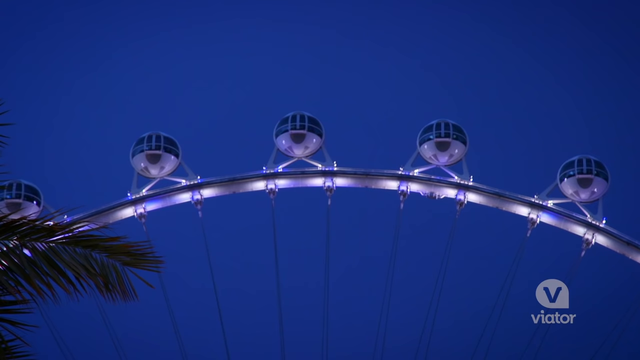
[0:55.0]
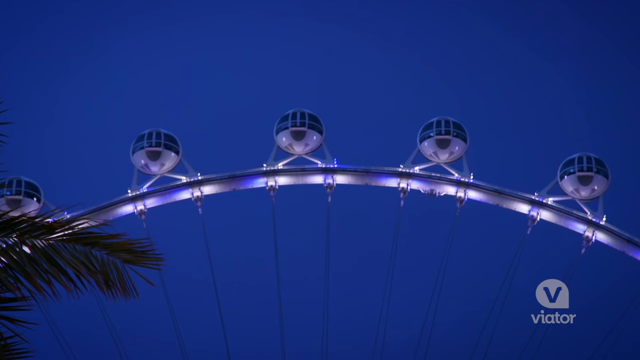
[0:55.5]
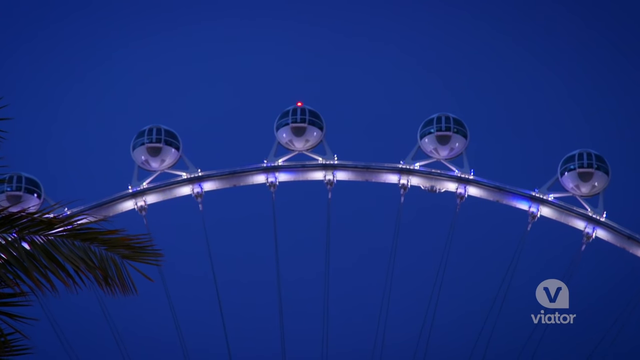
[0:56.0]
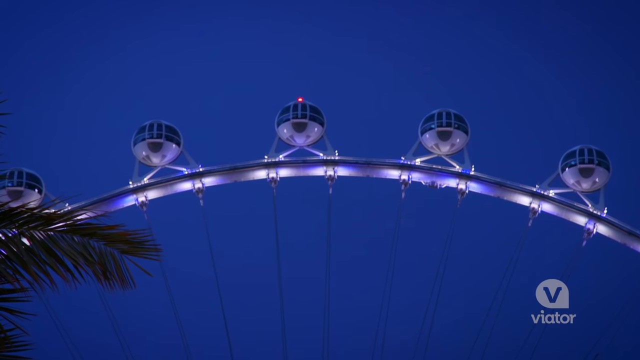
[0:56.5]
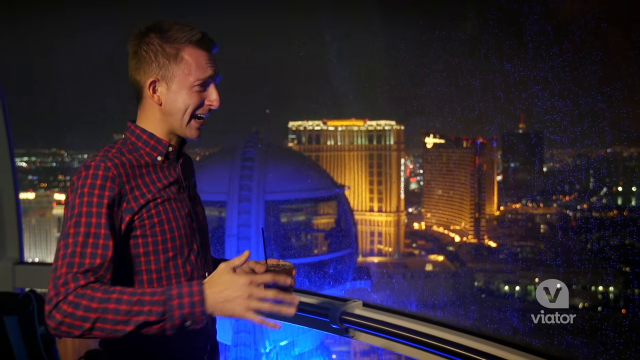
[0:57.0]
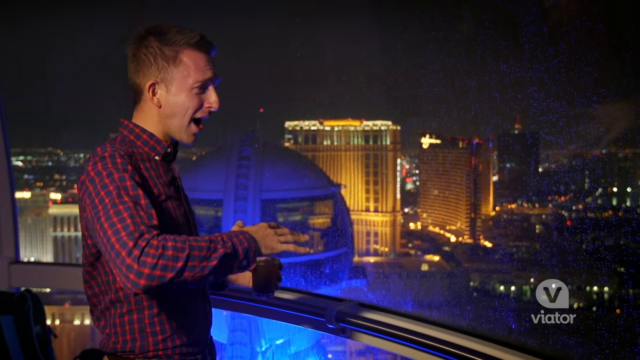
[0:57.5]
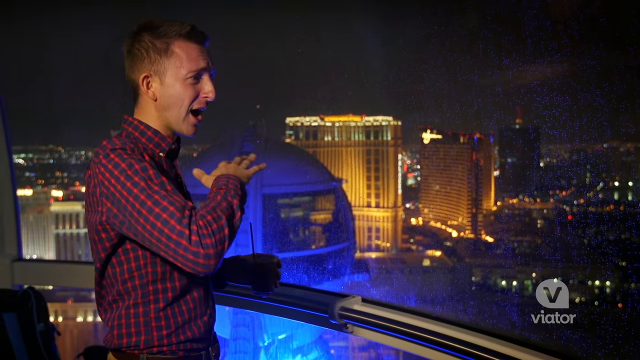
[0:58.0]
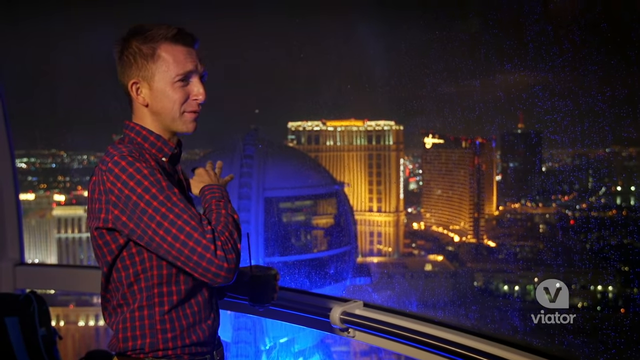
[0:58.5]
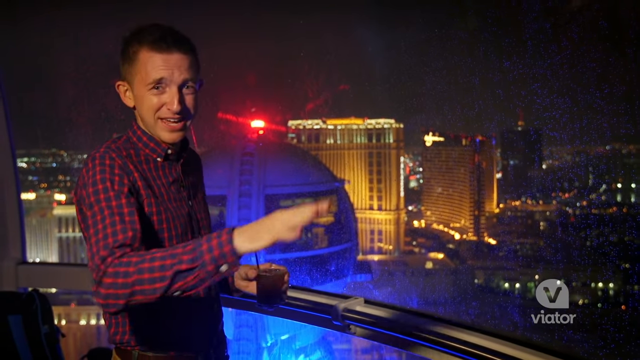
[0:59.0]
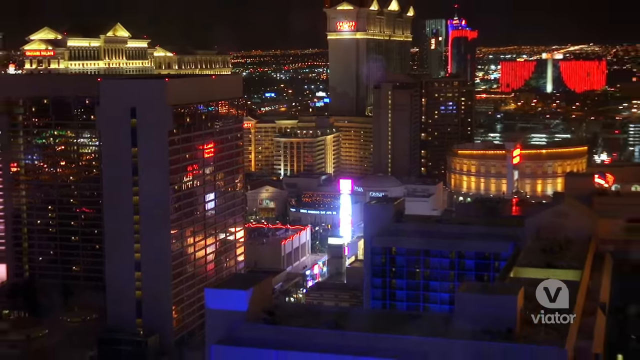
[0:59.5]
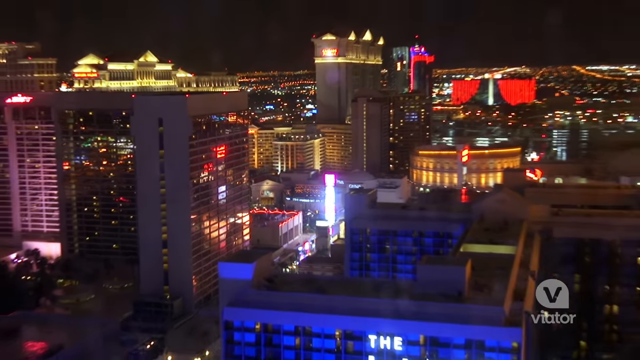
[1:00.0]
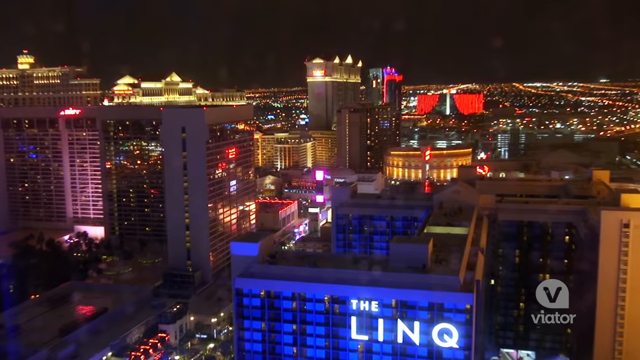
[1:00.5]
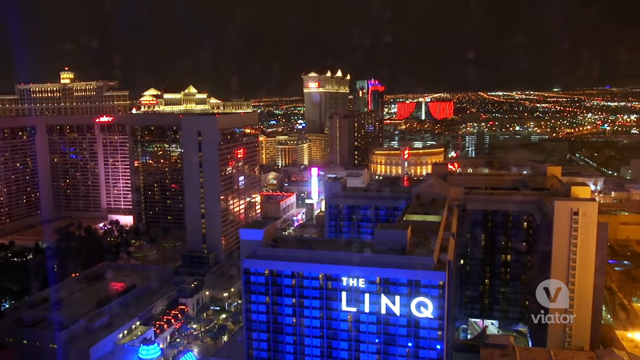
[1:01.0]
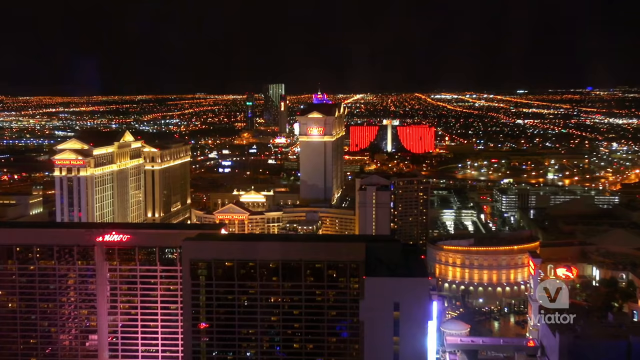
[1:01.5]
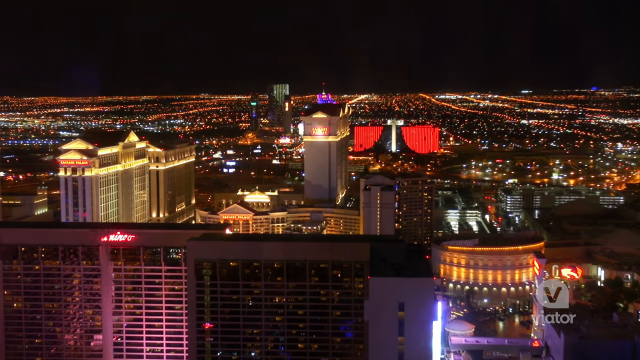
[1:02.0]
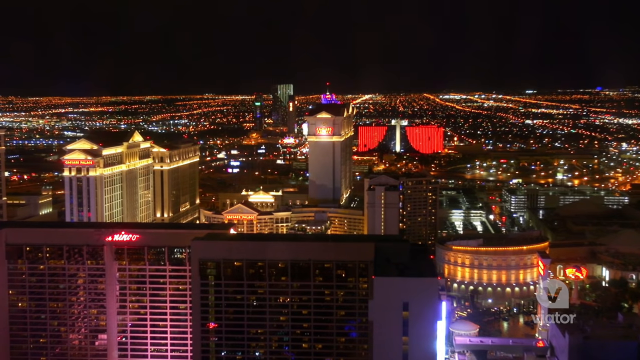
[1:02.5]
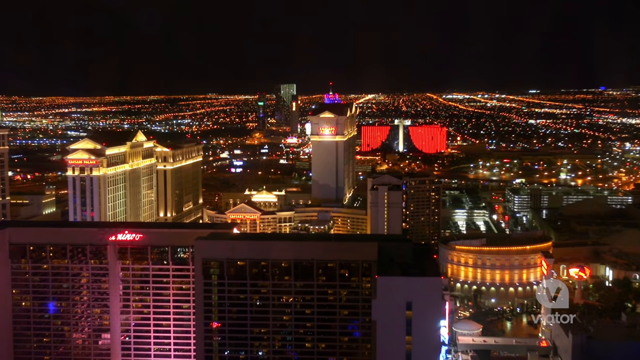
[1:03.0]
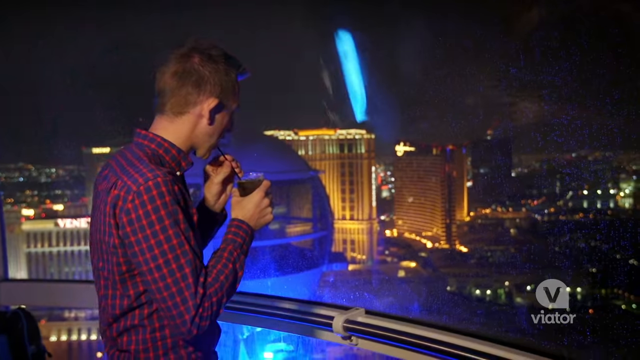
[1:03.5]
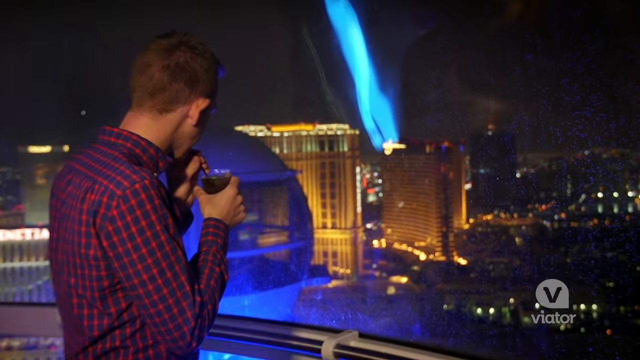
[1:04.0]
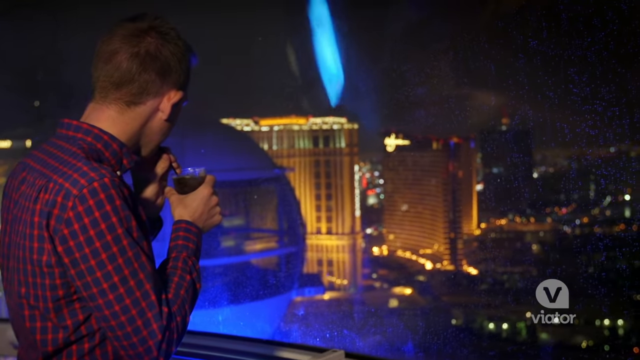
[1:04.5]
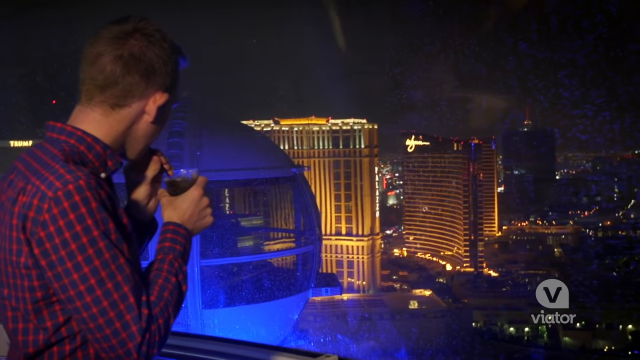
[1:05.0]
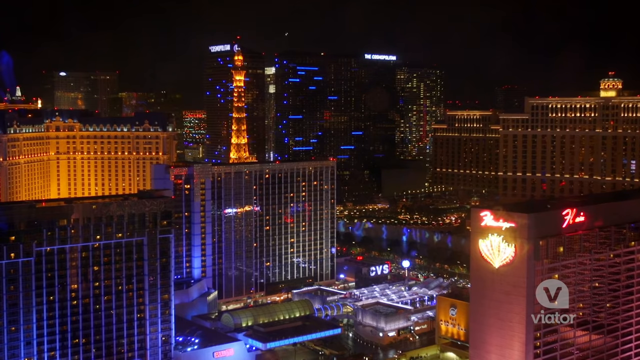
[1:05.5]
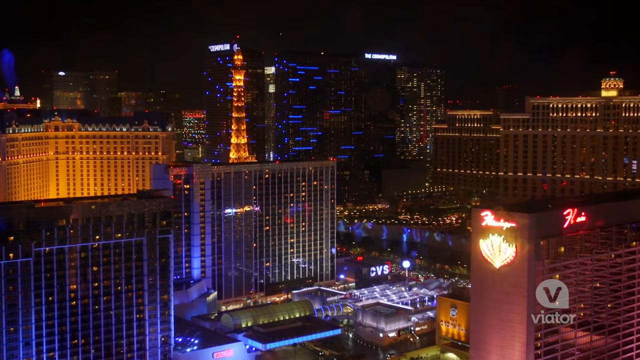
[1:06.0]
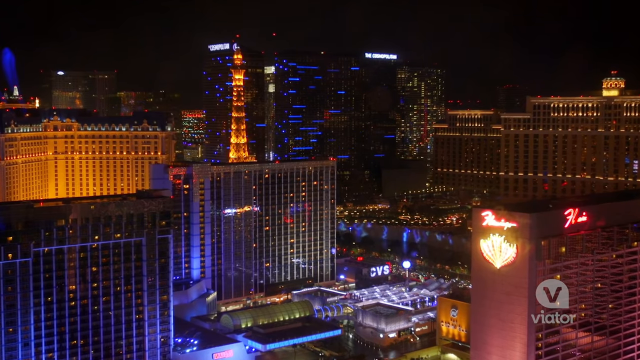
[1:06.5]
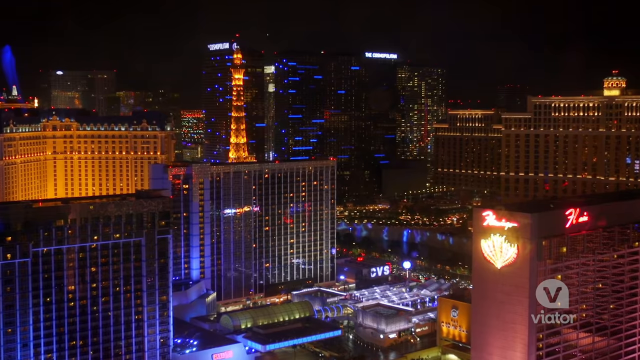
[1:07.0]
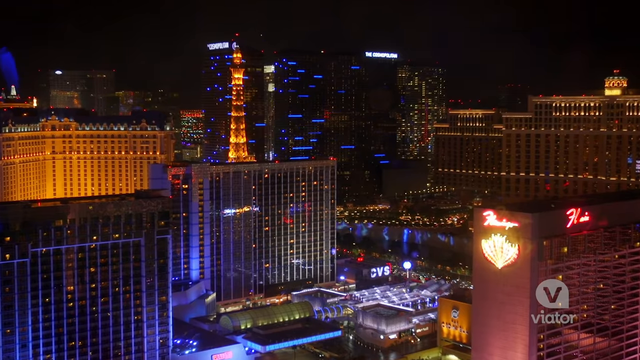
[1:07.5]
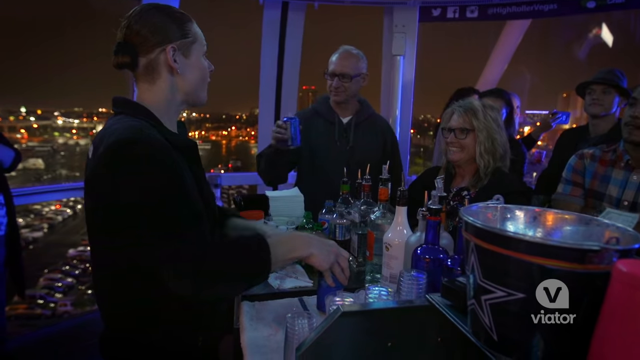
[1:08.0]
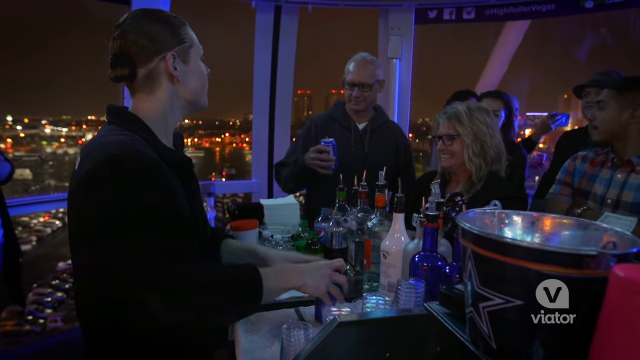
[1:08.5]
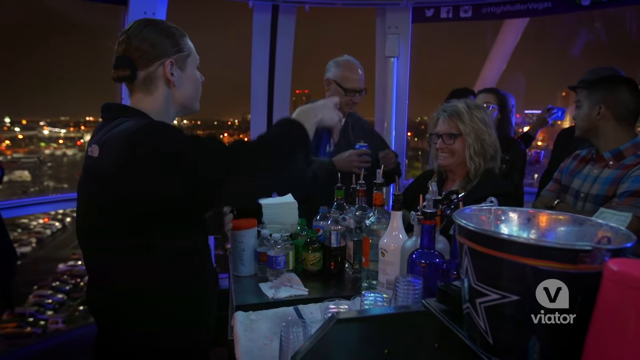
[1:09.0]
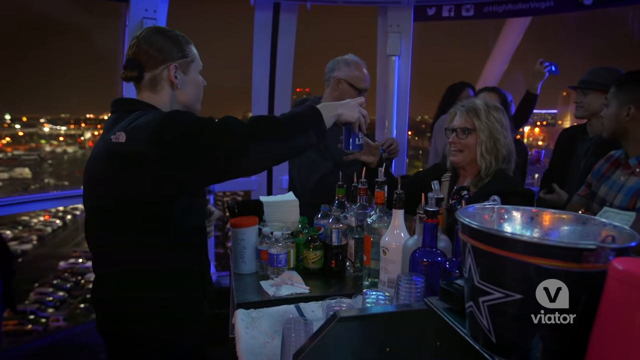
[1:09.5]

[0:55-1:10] An arched metallic contraption appears, with at least five round things on the arched silver structure. A man in a red and black gingham-type shirt gestures with his right hand while talking to the camera. A wide pan shows the city lit up brightly, apparently Las Vegas or somewhere Vegas-like, with many bright lights, particularly lights illuminating the sky. A bartender in an informal setting, with a lot of liquor in front of them, seems to be pouring drinks for everybody; it is unclear whether the bartender is a man or a woman. They wear a black outfit and fill and hand out drinks.